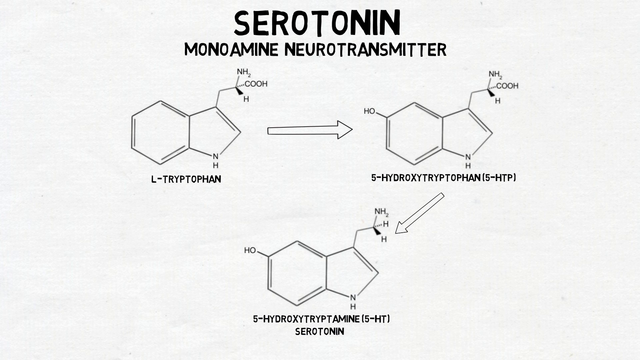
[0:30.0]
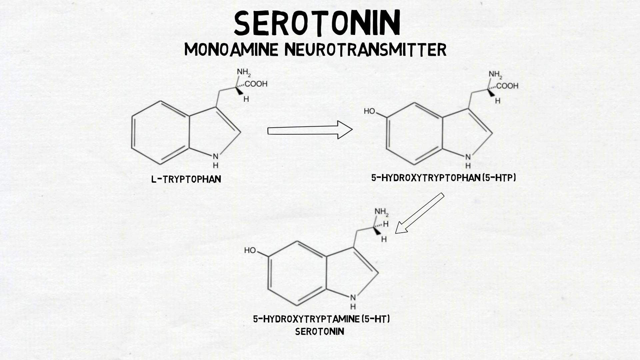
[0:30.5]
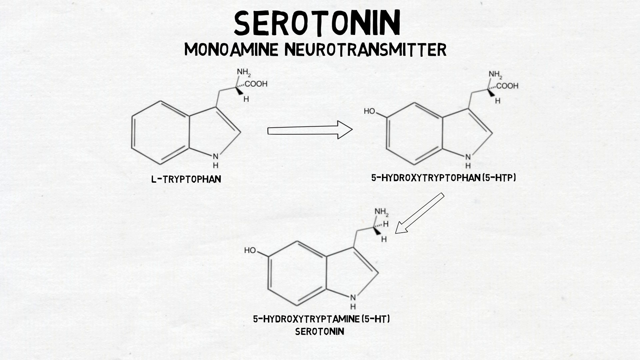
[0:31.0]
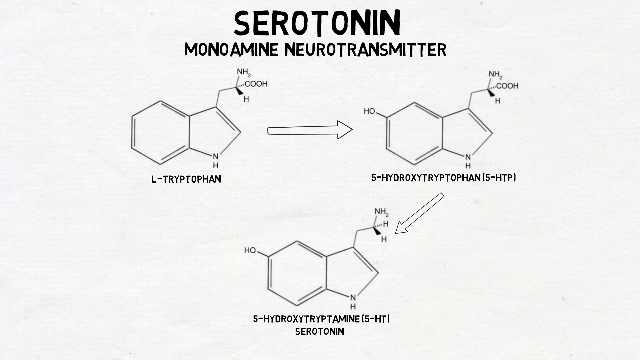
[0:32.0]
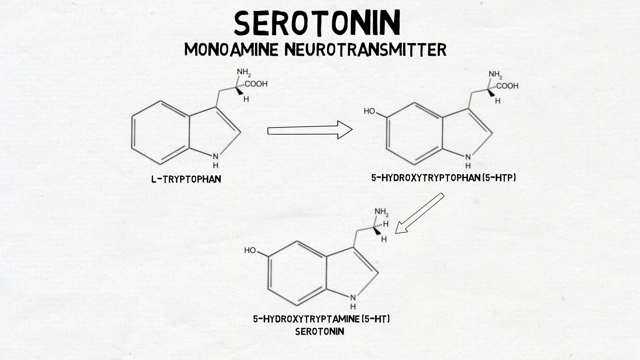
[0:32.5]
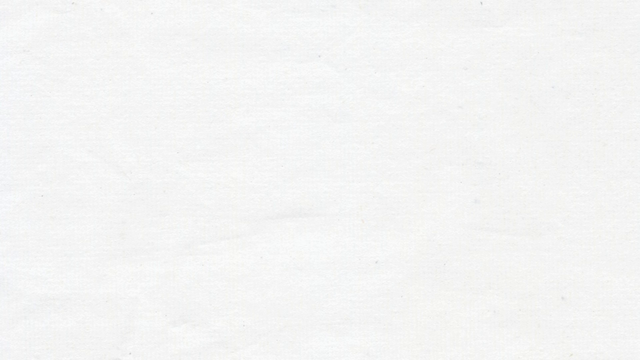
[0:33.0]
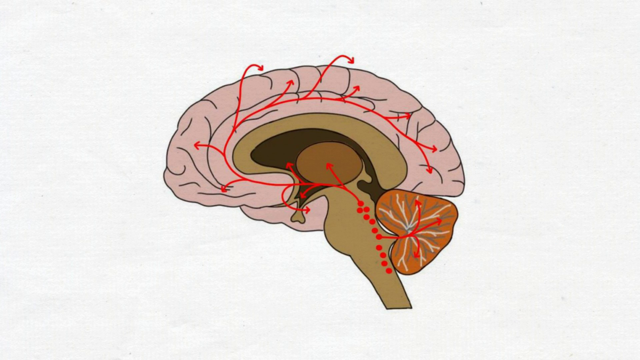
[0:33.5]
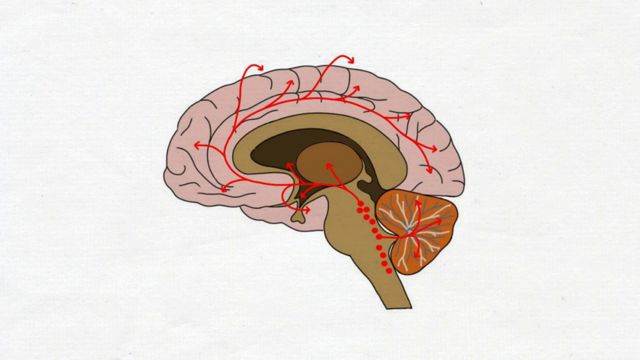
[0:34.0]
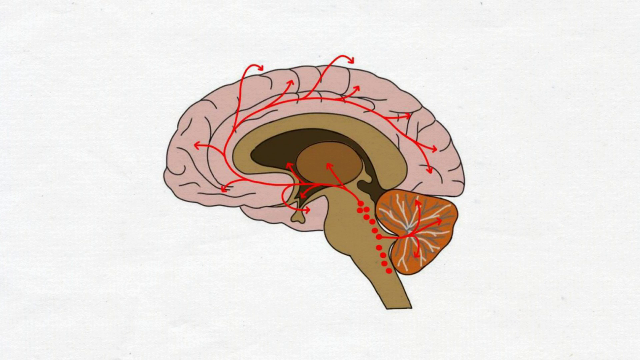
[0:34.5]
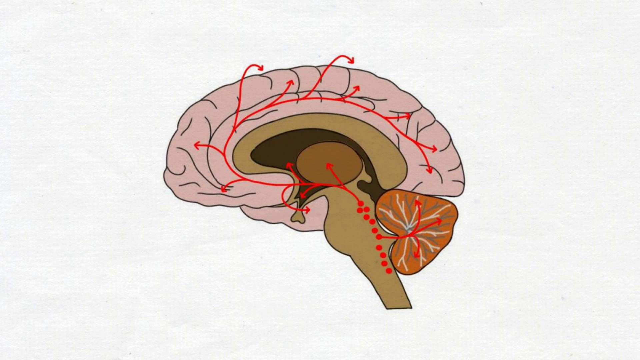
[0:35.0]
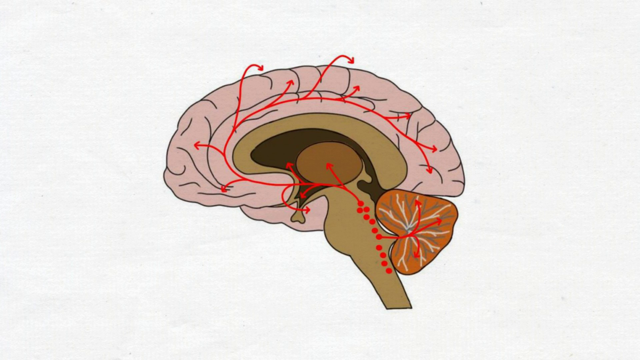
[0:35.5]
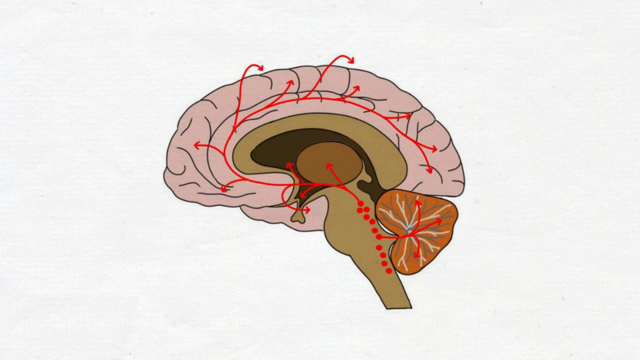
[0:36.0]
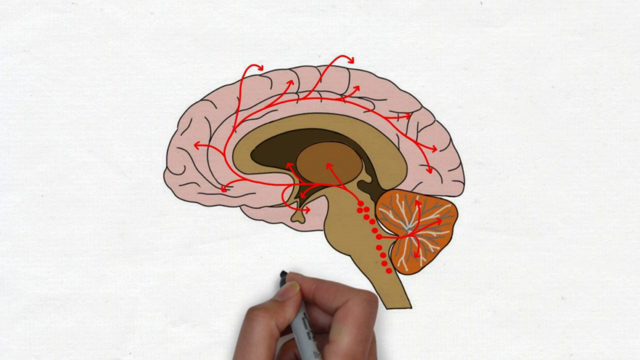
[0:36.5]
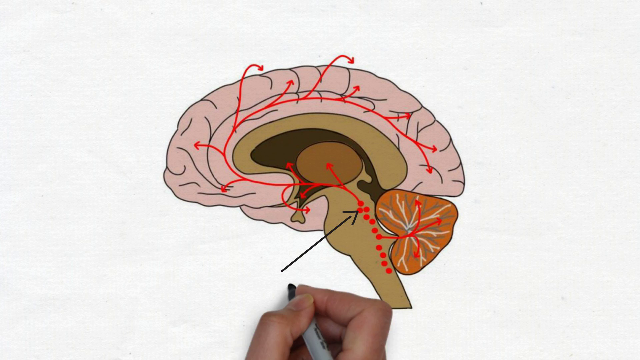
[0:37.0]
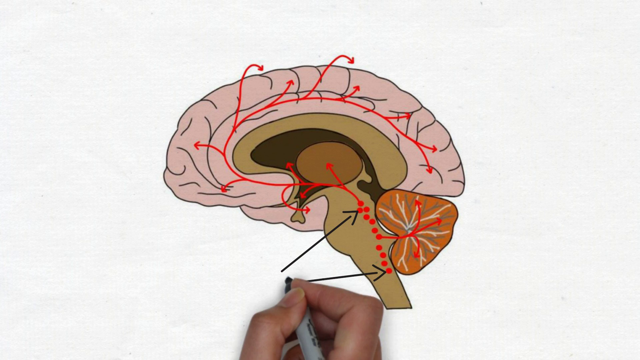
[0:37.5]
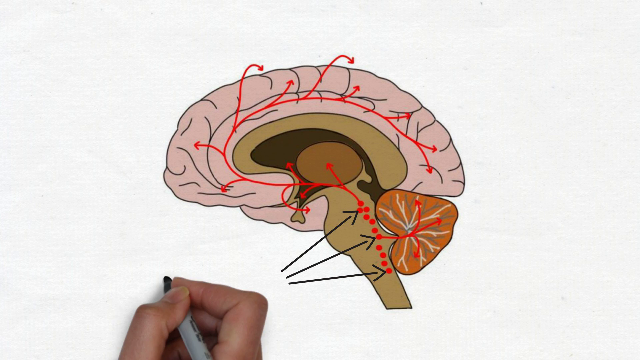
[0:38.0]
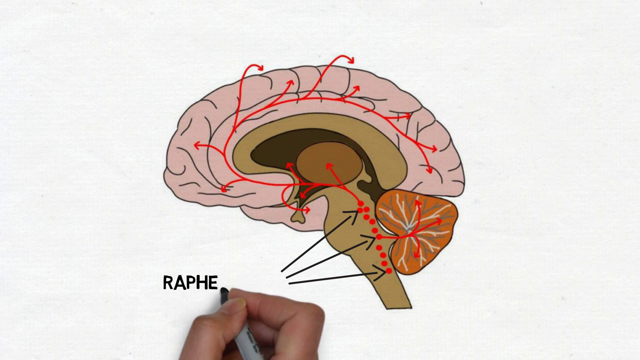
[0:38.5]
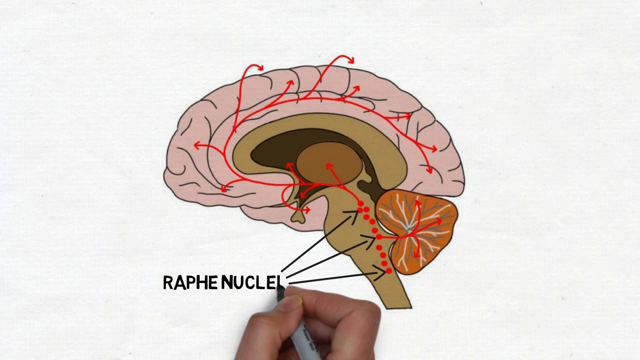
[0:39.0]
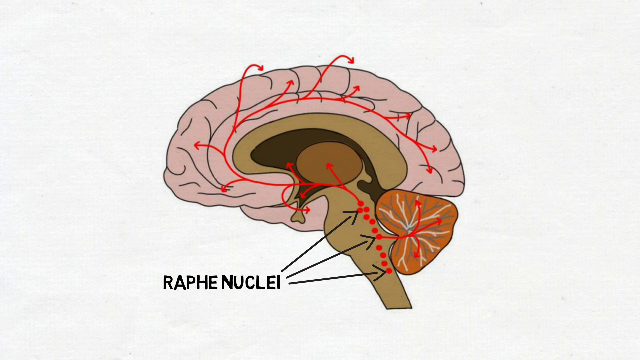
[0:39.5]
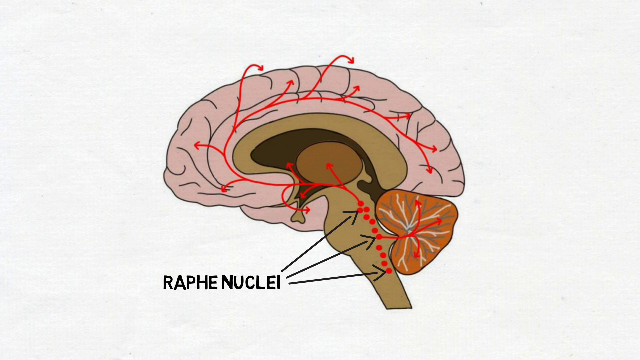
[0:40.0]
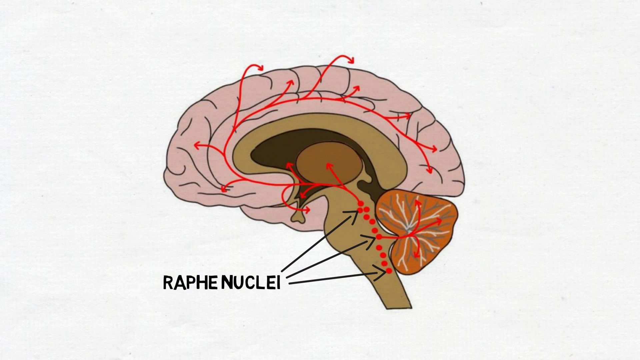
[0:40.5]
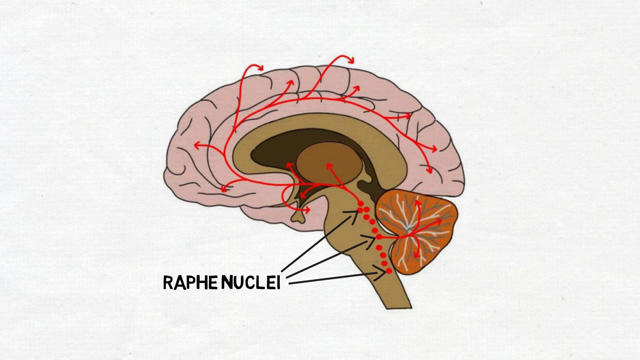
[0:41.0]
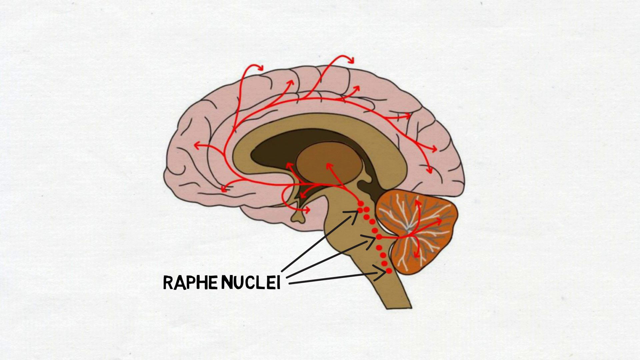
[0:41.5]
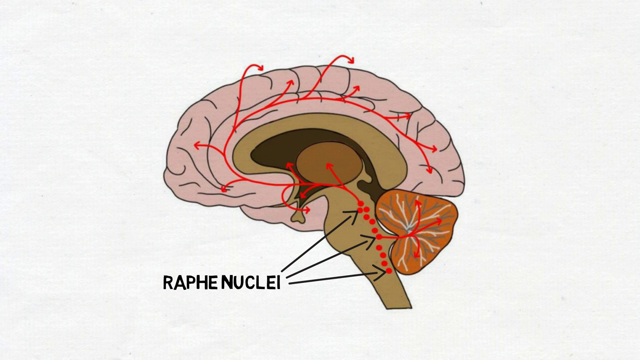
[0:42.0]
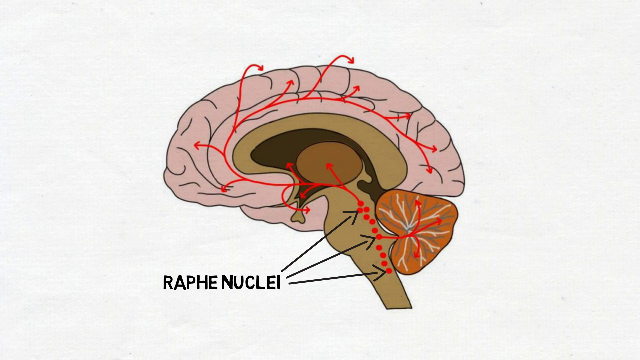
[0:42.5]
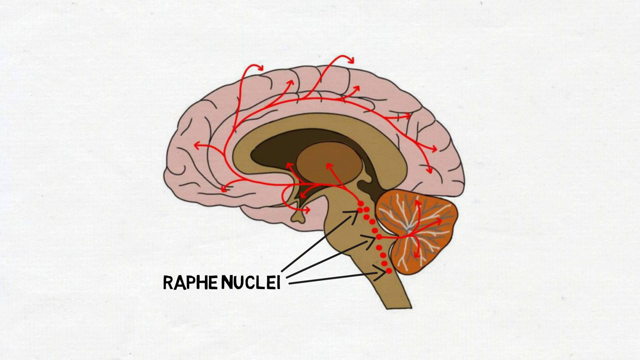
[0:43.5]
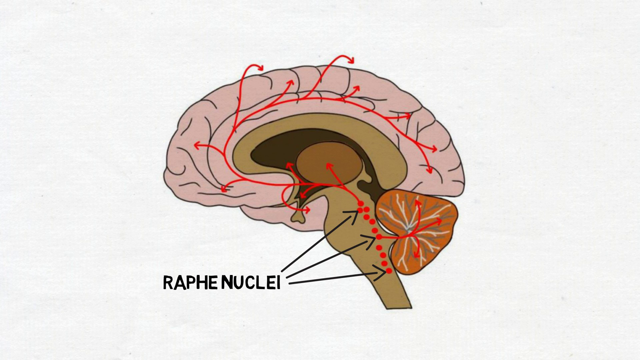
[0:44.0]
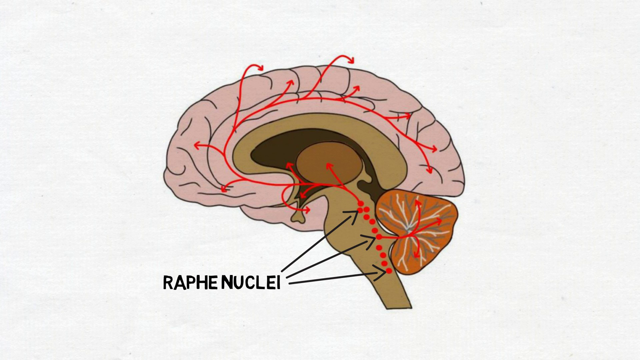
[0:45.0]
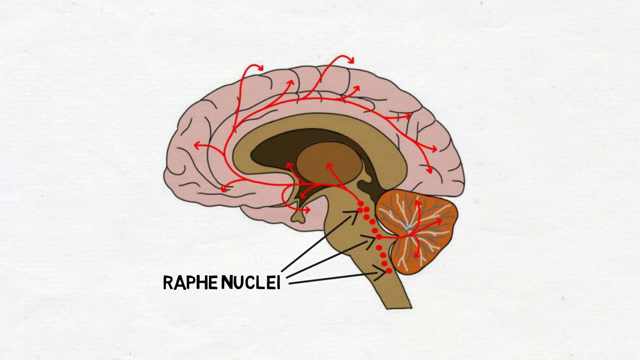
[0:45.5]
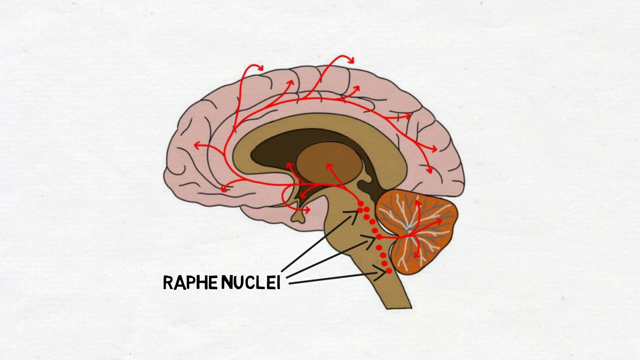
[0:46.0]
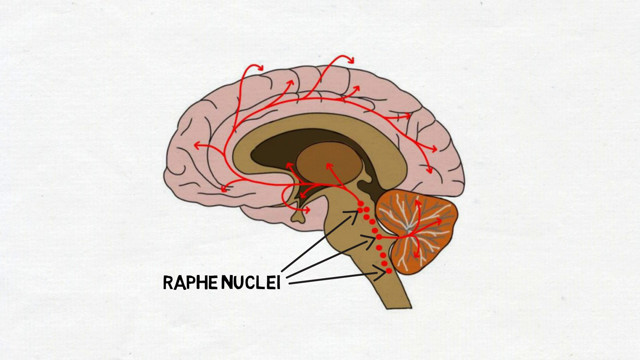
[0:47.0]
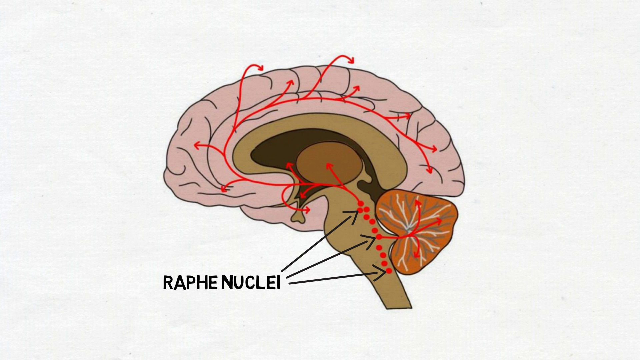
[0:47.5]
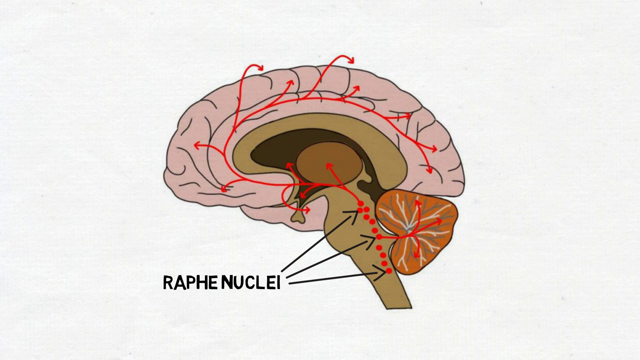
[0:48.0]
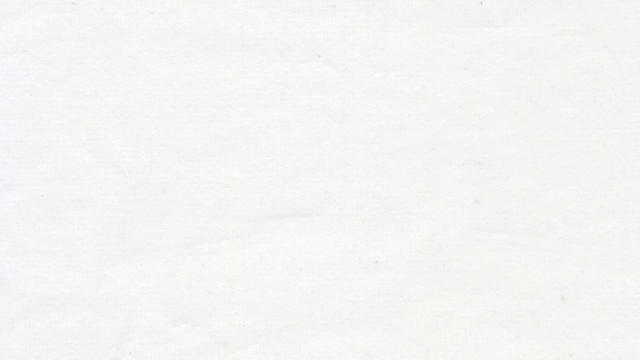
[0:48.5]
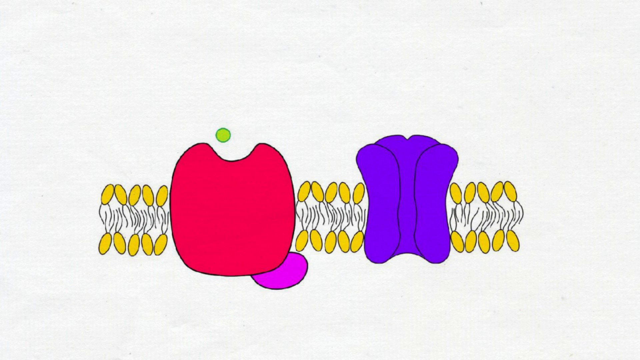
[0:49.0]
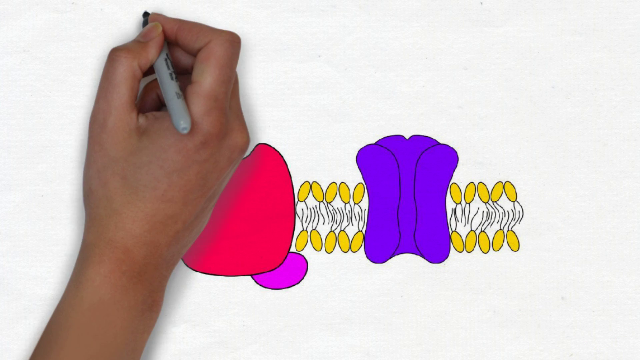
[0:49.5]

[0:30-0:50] The white screen has the word "serotonin" written in dark black letters at the very top, with "monoamine neurotransmitter" underneath. Below that, on the left, is a design of two octagons stuck together with "L-tryptophan" underneath it. To the right of the design is an arrow pointing to the right, and to the right of the arrow is the same design with "5-hydroxytryptophan" and, in parentheses, "5-HTP" underneath it. A small line comes up off the designs with the letters "NH-COOH-NH" written at its tip. Underneath the two designs, in the middle, is the same design again, with text underneath it including "(5-HT)" and, below that, "serotonin." A hand then comes in and puts something in the middle of the screen, and a picture of a cartoon brain appears. The brain is light pink with black lines running through it, and red arrows point at different places on it. A hand holding a marker comes into frame, writes "RAF NUCLEI," and draws three black arrows to different places on the brain stem.